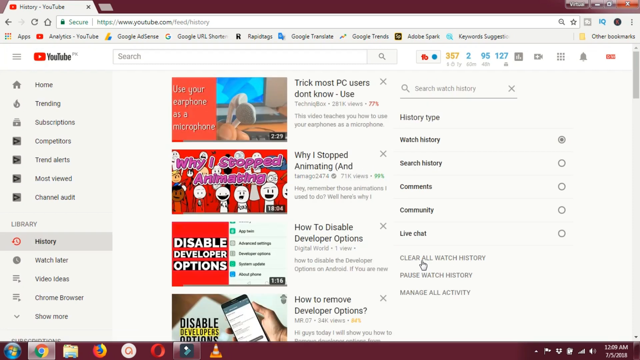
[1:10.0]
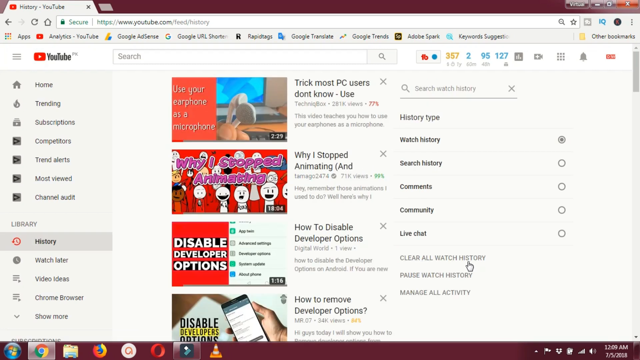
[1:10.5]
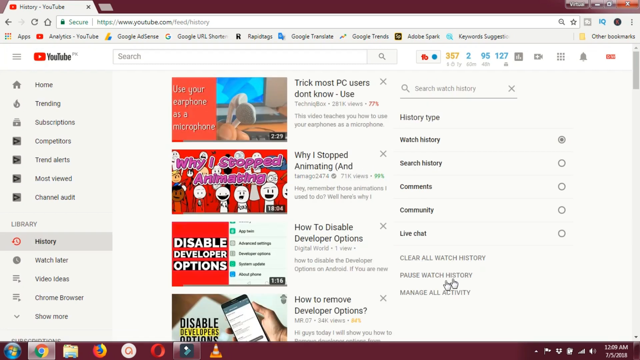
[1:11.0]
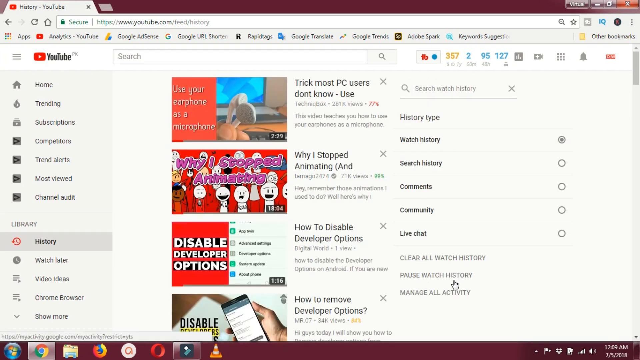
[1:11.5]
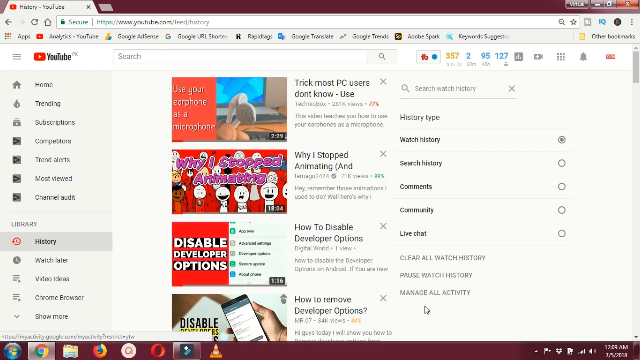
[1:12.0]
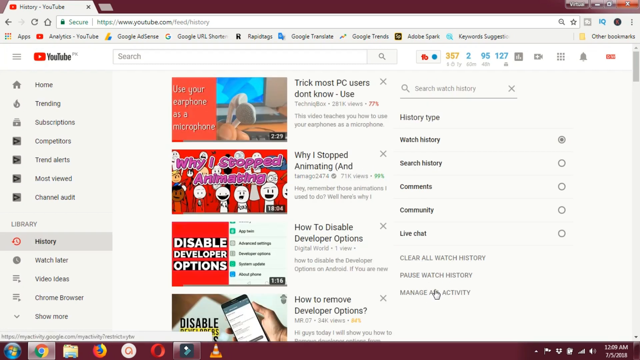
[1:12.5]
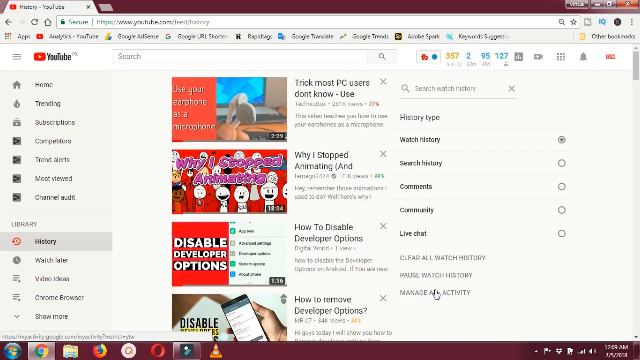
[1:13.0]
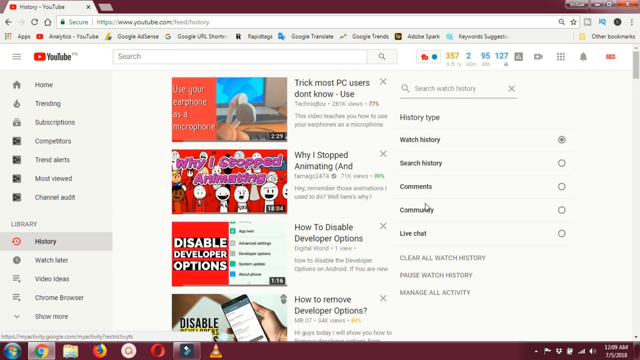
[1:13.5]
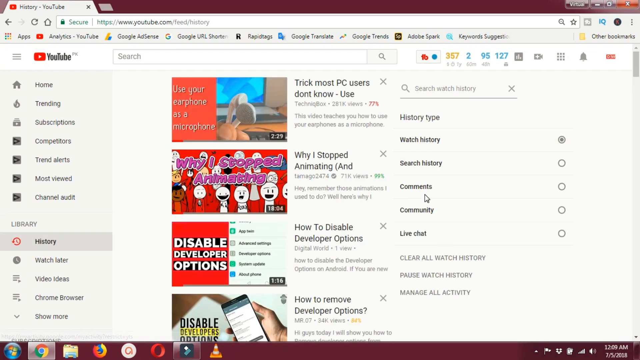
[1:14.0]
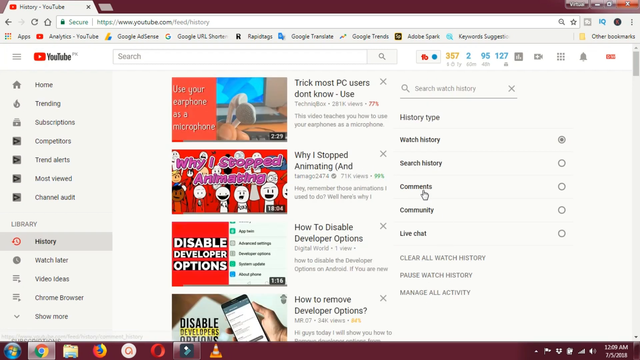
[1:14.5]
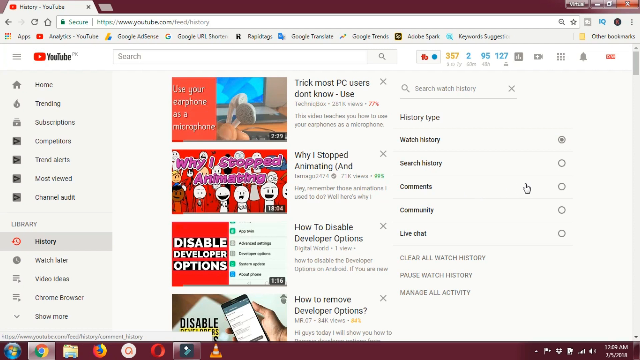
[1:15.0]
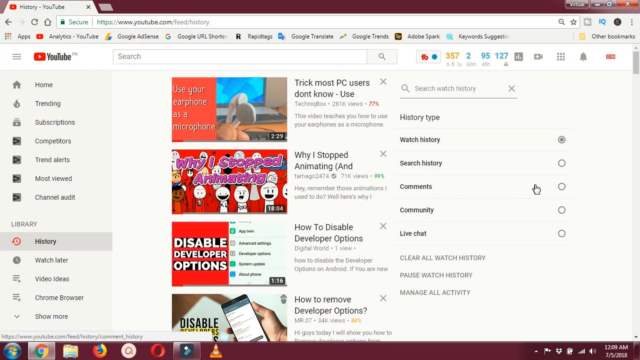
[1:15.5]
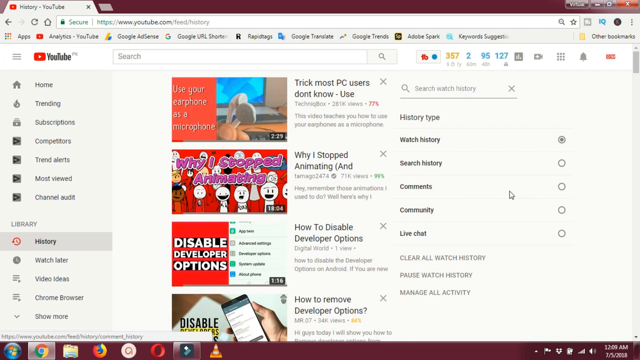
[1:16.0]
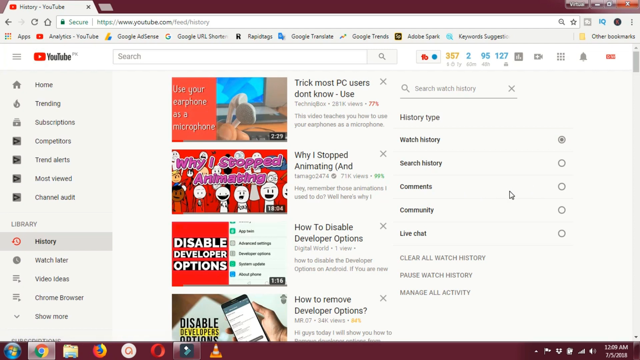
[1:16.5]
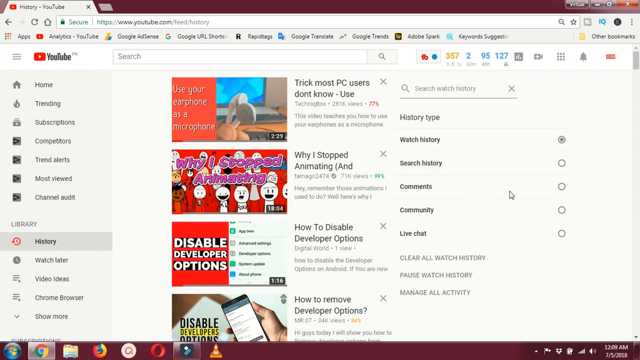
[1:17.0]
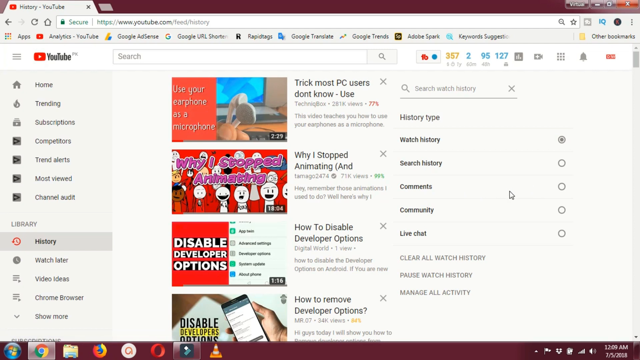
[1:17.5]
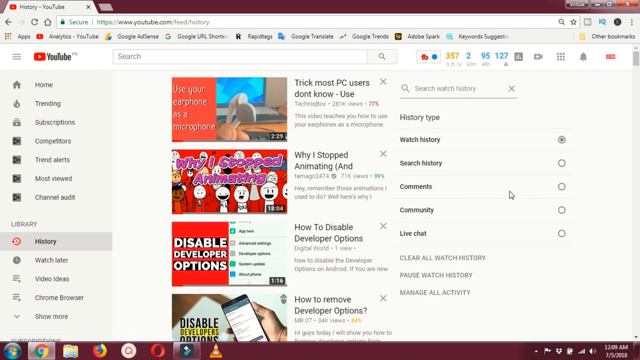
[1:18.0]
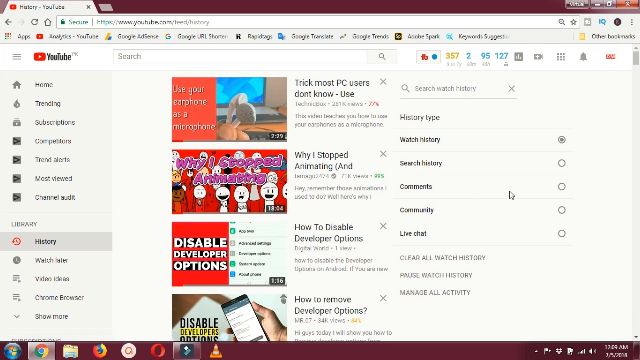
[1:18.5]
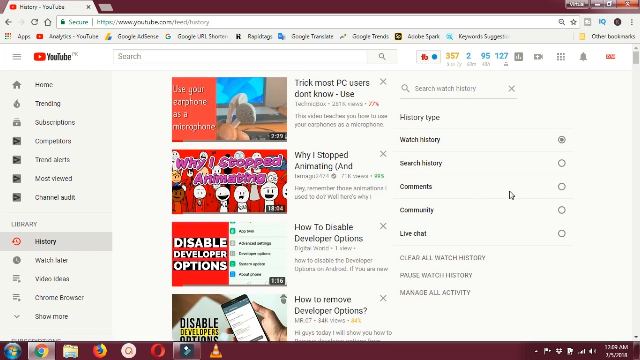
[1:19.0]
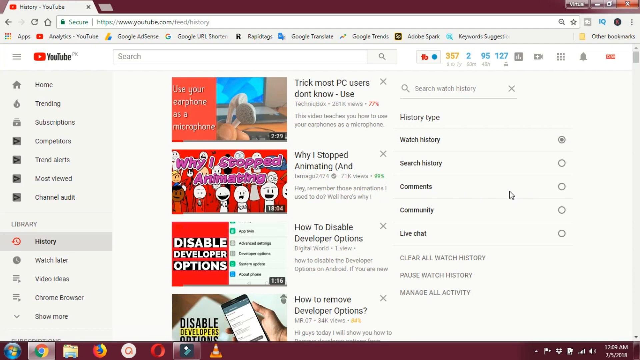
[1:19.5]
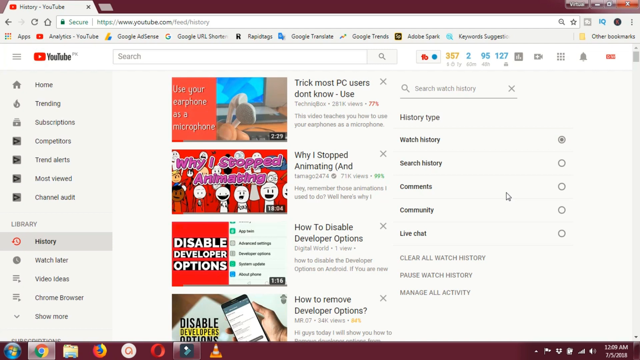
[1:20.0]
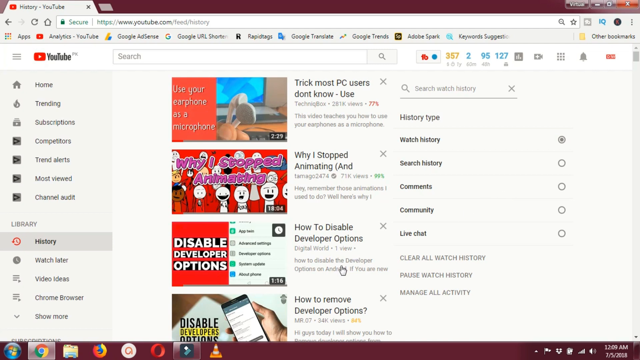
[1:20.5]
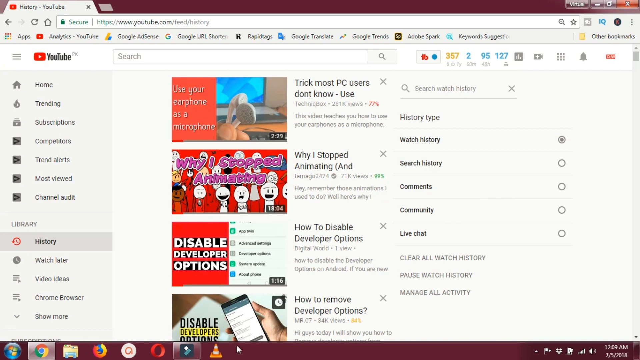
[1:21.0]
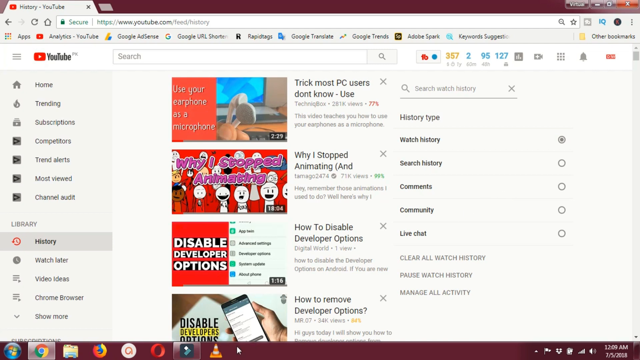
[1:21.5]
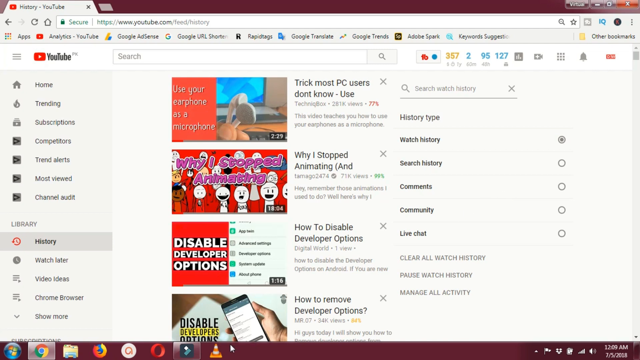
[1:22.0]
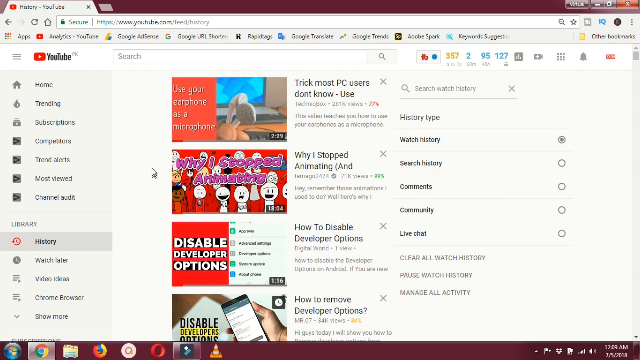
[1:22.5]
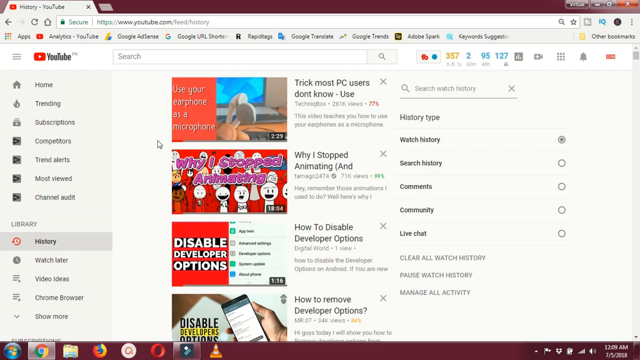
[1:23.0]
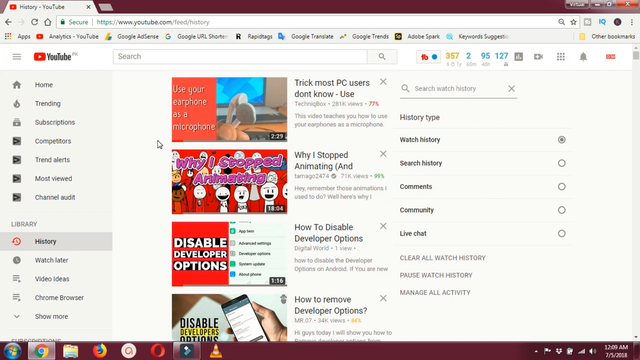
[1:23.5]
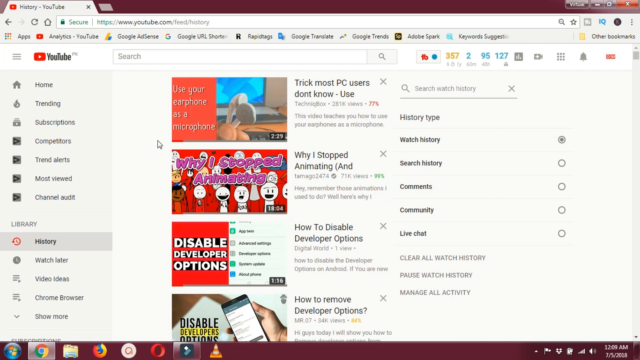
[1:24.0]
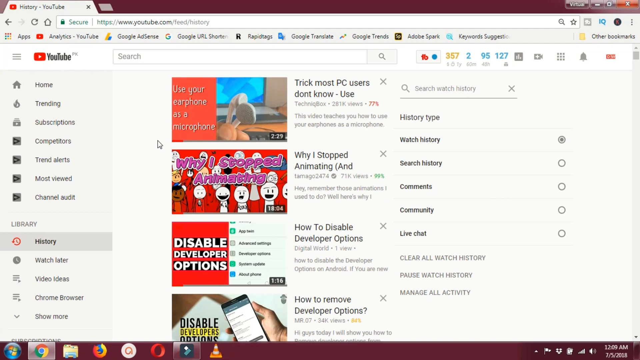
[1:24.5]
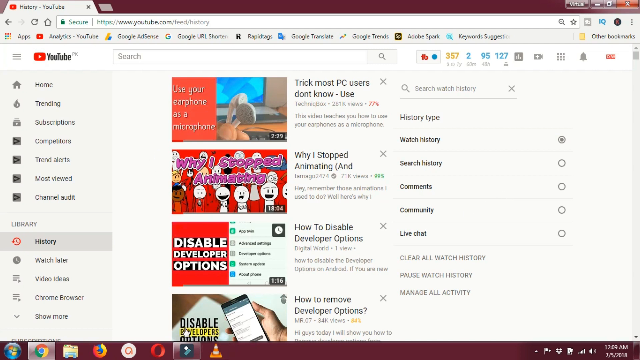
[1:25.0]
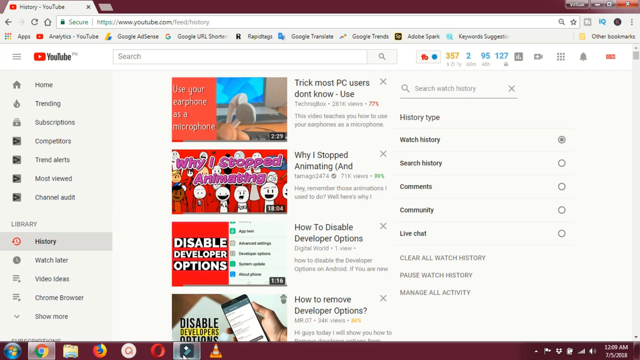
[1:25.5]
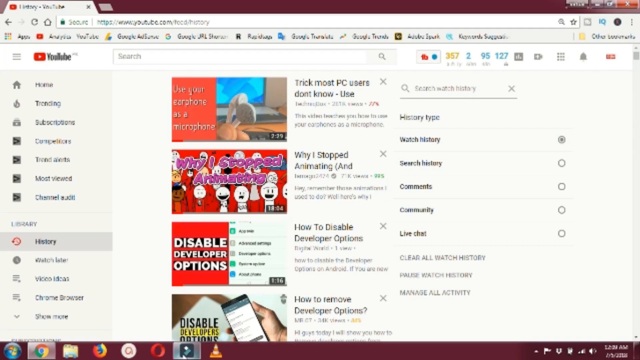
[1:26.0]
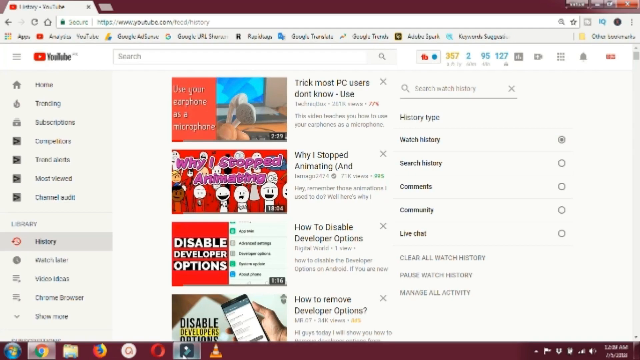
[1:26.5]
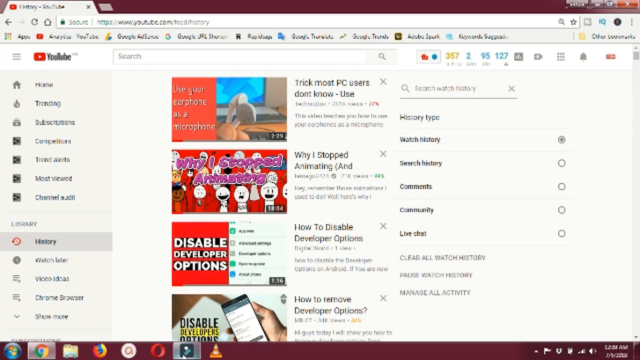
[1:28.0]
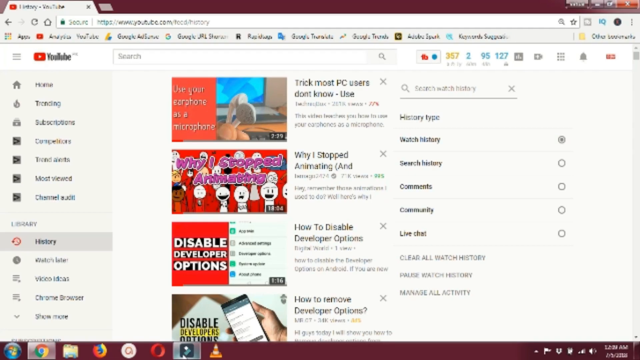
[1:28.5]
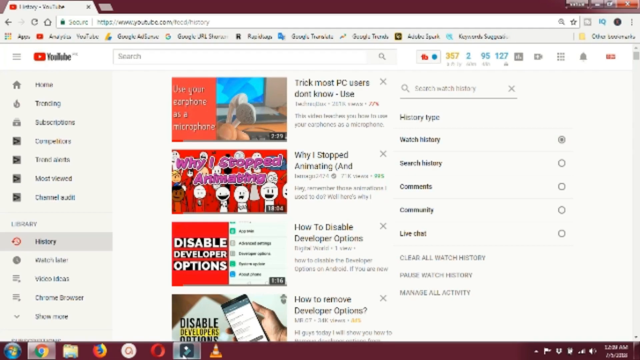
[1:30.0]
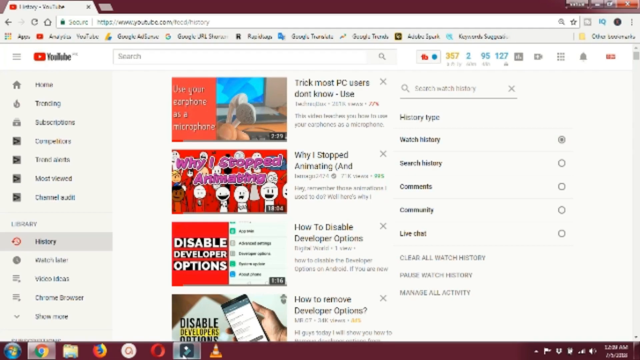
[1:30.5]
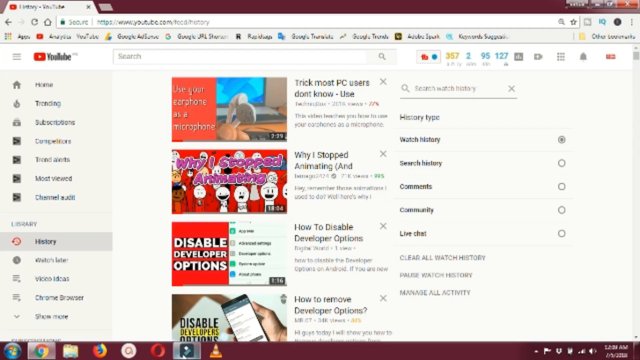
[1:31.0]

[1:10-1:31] A list of options is shown: history type, watch history, search history, comments, community and live chat. The cursor moves around over these options. The person's history is then shown, with videos including "tricks most PC users don't know", "why I stopped animating", "how to disable developer option" and "how to remove developer option", apparently tech-related topics. No video is opened for viewing.